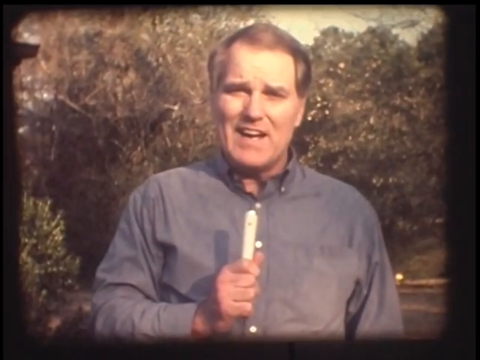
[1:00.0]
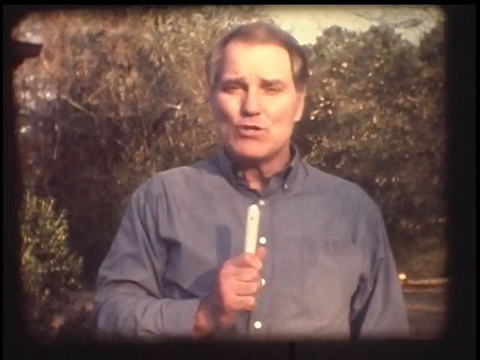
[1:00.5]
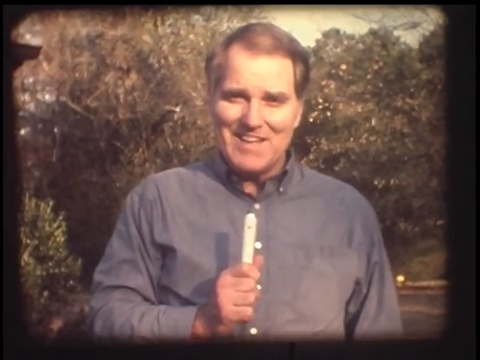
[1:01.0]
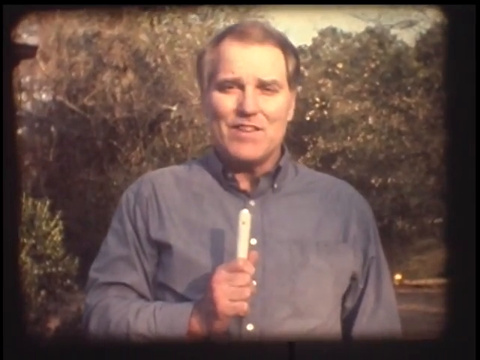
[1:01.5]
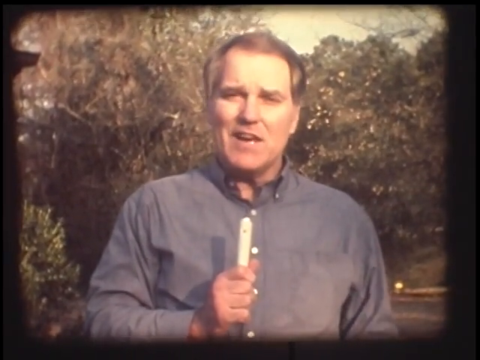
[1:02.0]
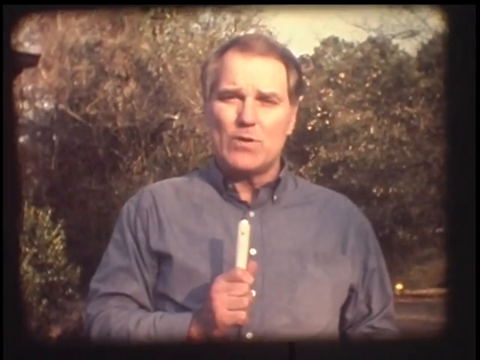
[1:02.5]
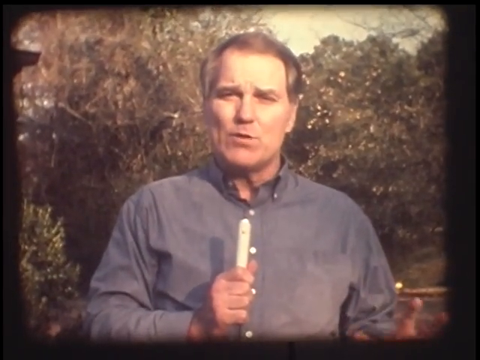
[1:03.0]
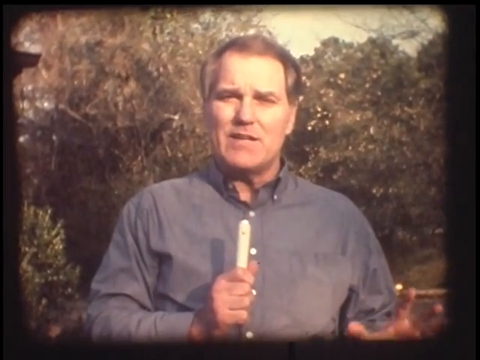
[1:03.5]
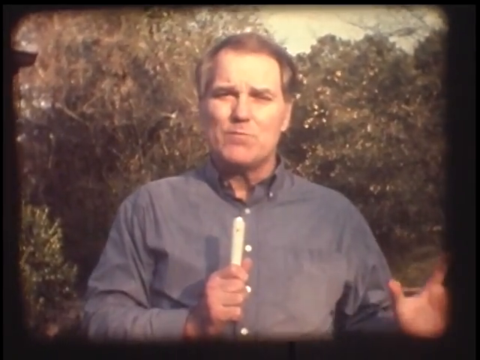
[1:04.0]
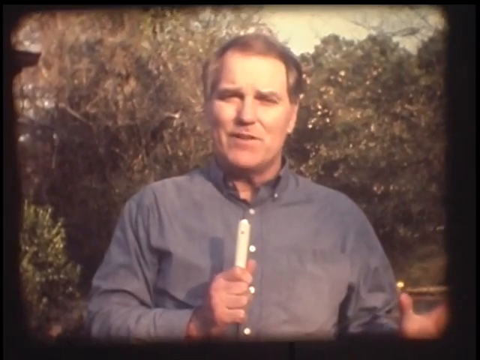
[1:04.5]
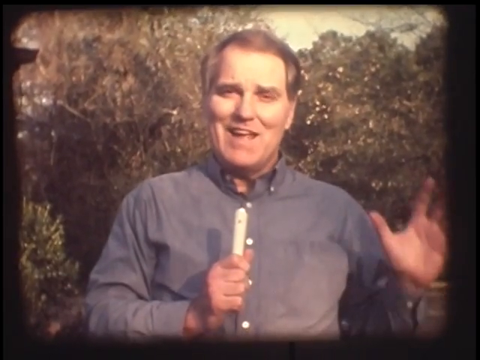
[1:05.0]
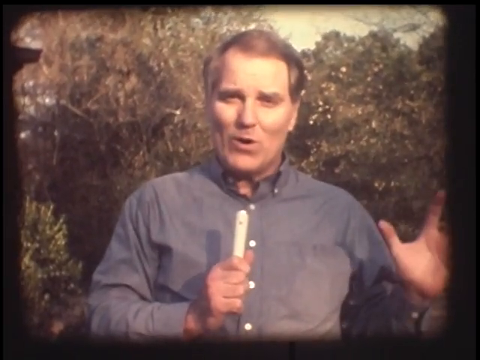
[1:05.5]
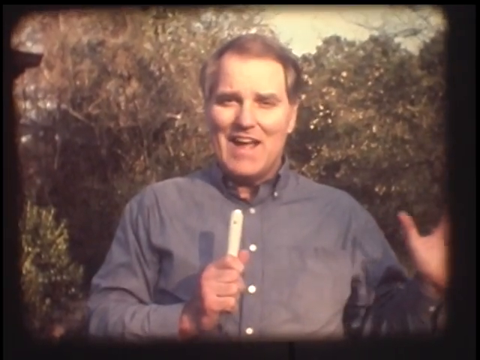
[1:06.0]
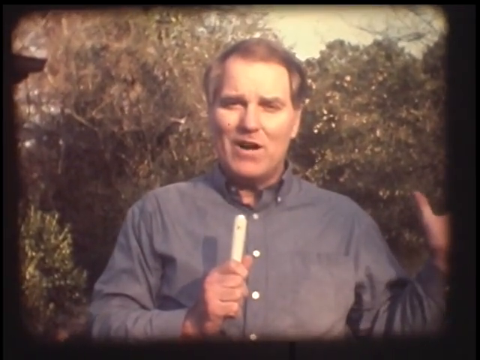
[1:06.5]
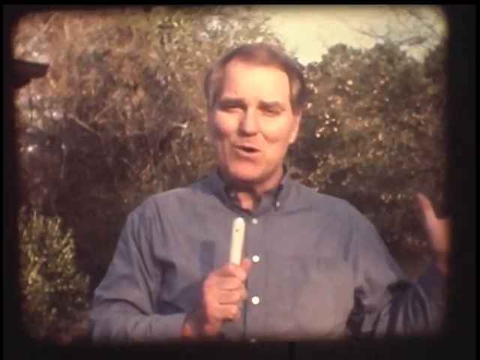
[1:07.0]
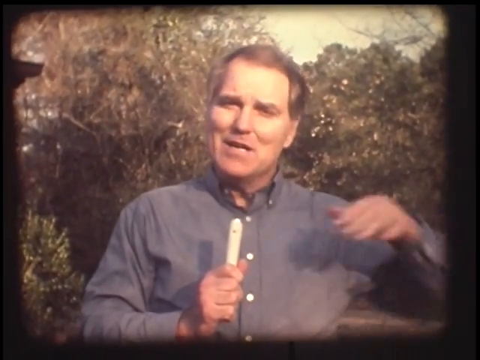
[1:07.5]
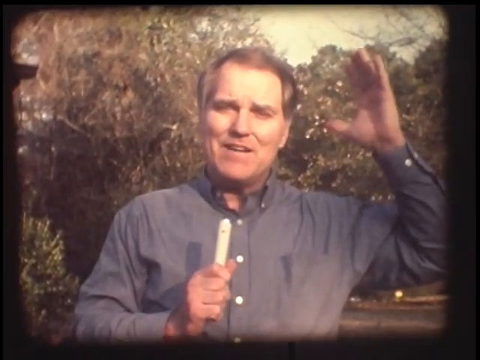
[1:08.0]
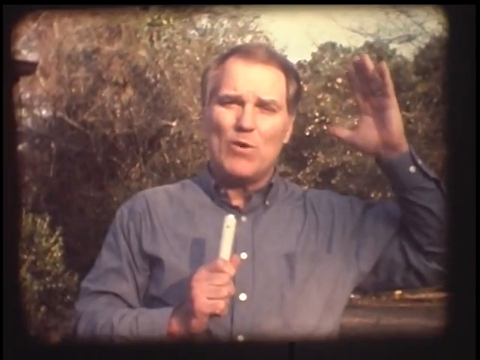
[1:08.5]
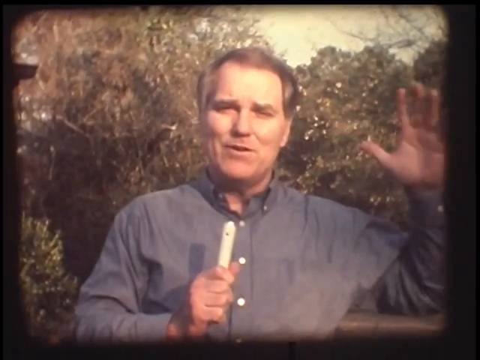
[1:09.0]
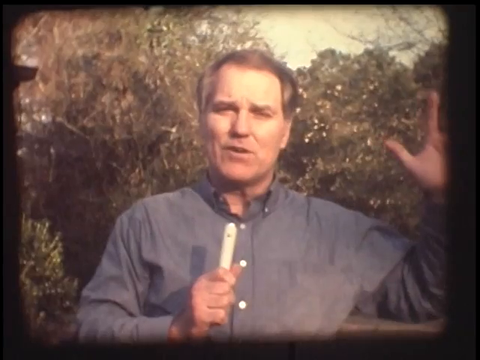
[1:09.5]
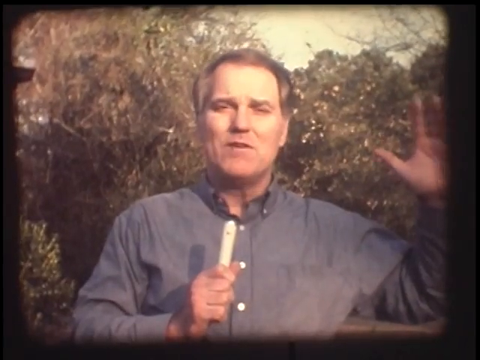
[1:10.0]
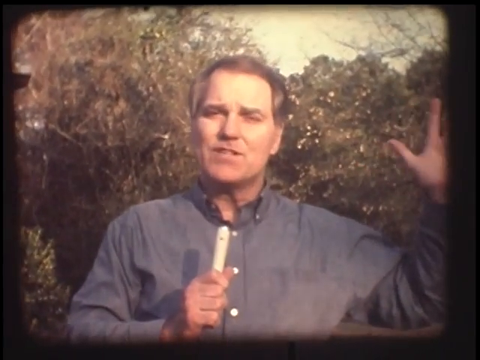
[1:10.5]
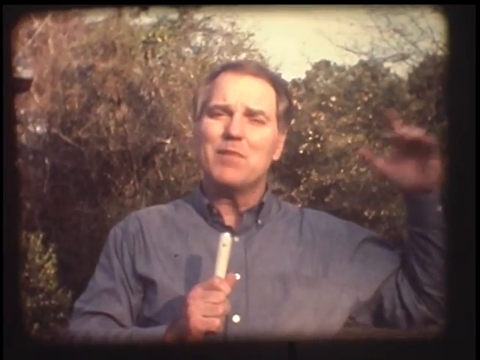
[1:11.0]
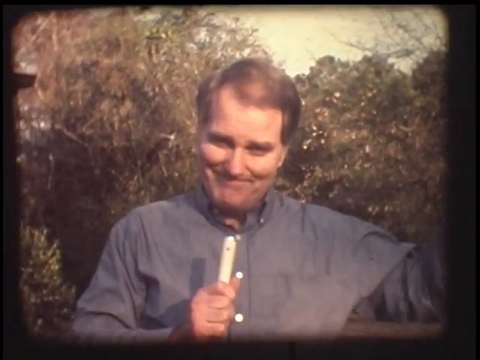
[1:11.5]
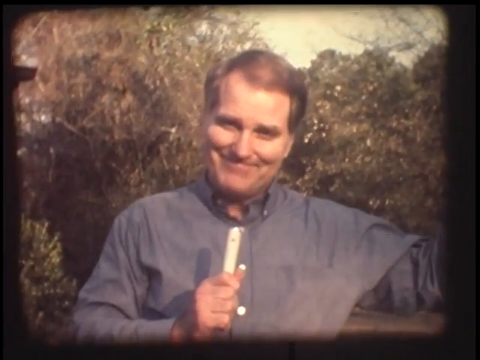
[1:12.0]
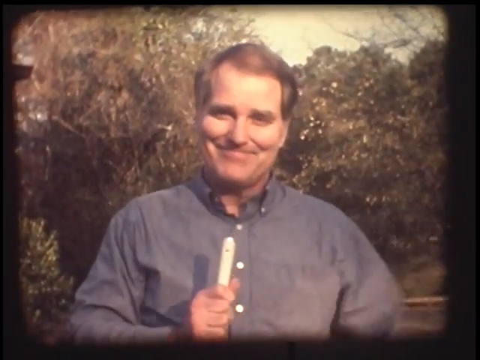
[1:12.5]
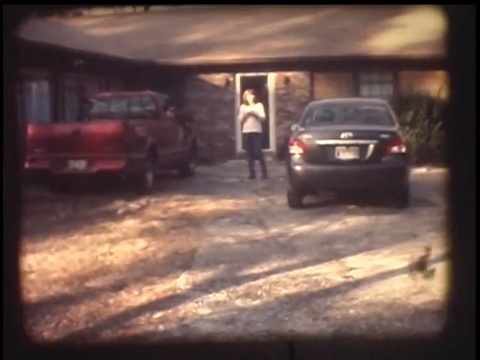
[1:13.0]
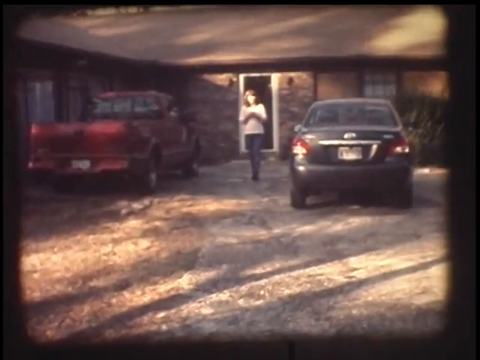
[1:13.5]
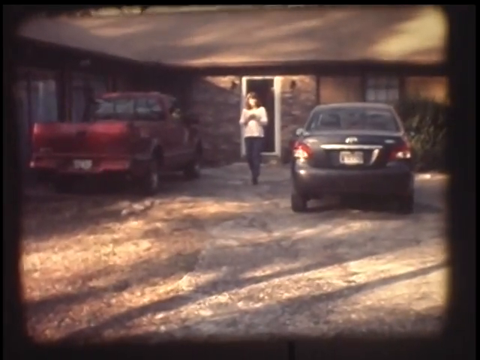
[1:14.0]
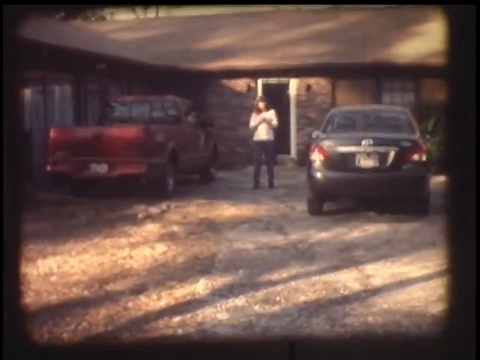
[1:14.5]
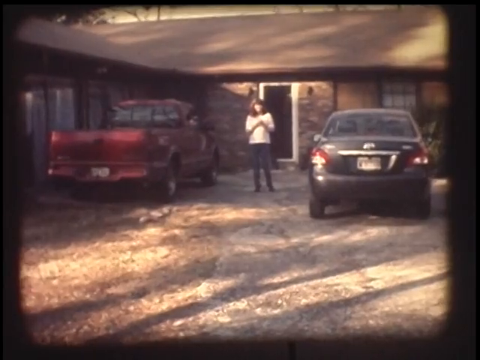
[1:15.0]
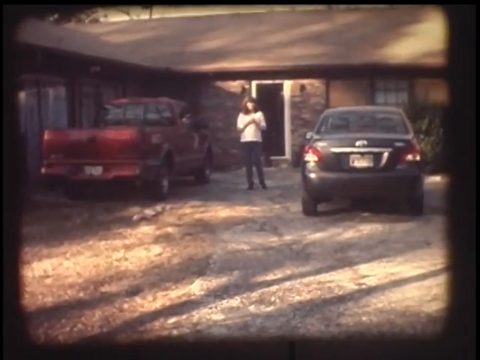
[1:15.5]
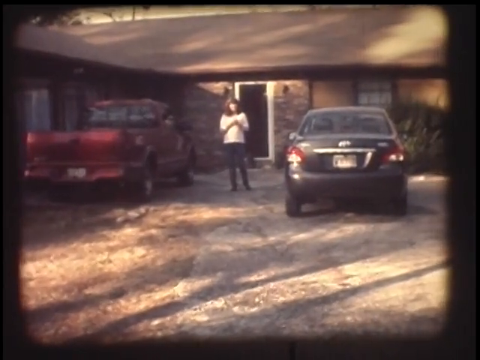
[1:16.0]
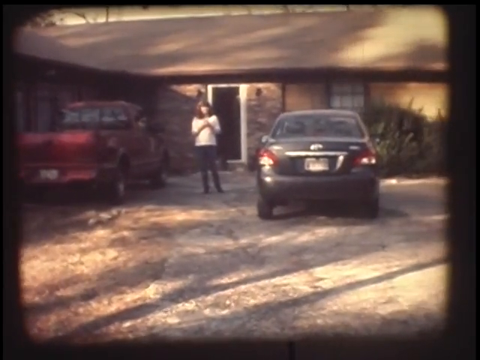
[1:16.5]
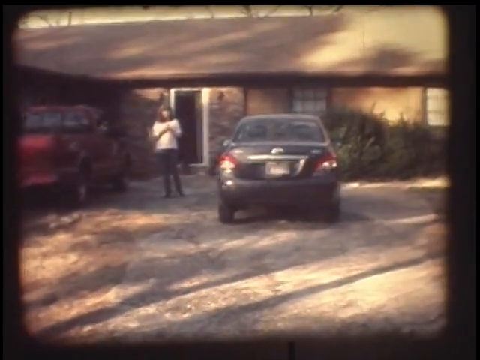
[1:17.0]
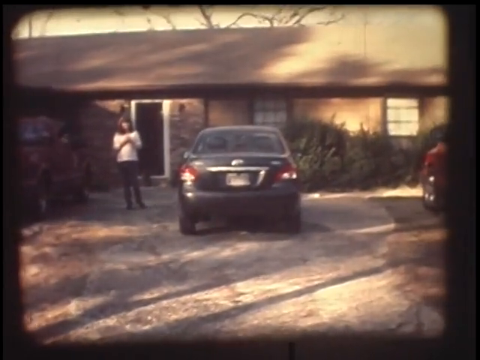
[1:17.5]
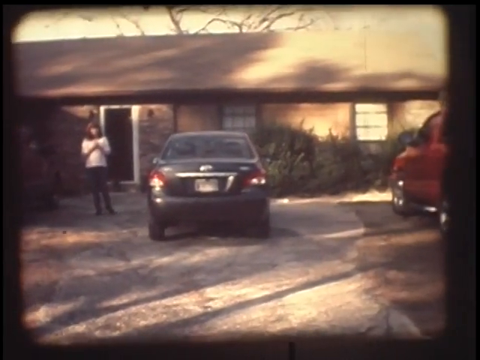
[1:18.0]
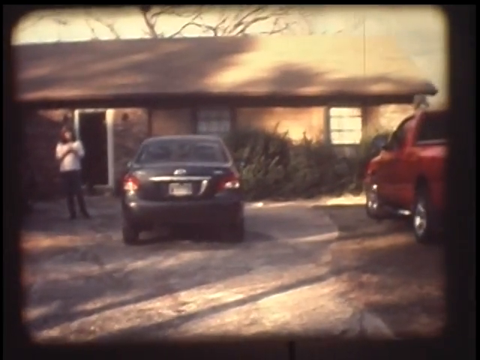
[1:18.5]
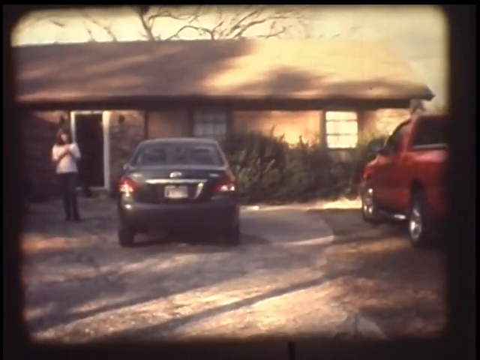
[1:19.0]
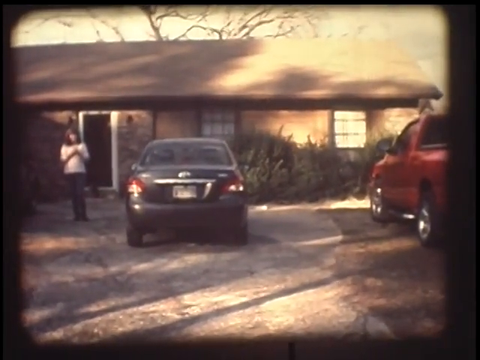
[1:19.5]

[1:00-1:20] The grainy film has a black border around the top, left and right sides, a little thicker on the left and right. Thick trees fill the background, with a little of the sky visible from the center going right. The man in the blue shirt holds the microphone in his left hand about two inches below his chin. His other hand kind of moves up a couple of times: once it comes up and spreads out wide, palm toward the camera; then he moves it off screen to the right so that only his thumb can be seen as he talks. He brings it back in, waves it up to his chest area and then up beside his ear, then back out to the side at about the level of his head, palm toward the camera, his fingers going off the screen a couple of times. He tilts his head forward and kind of gives a little smirk as his hand goes completely off the right side, then drops it back down to his side. Next, a woman in a white shirt and blue jeans with dark hair is really far in the distance, standing in a driveway with a big brown house behind her. The back of an old red truck is on her left, and an old black car, probably from the 2000s, is on her right. The camera slowly pans to the right until she is right on the left edge, and the driver's side of another red truck comes in on the right side. The camera starts panning back to her. Shadows of the trees are visible on the top of the house.